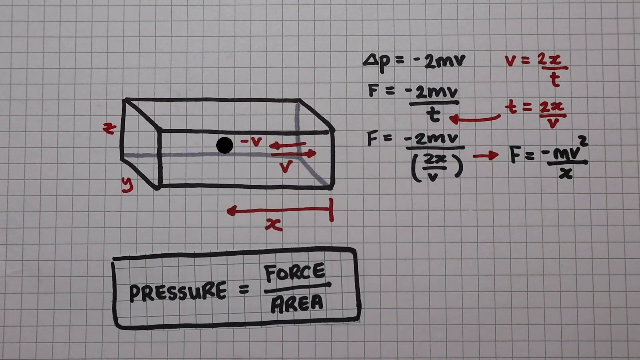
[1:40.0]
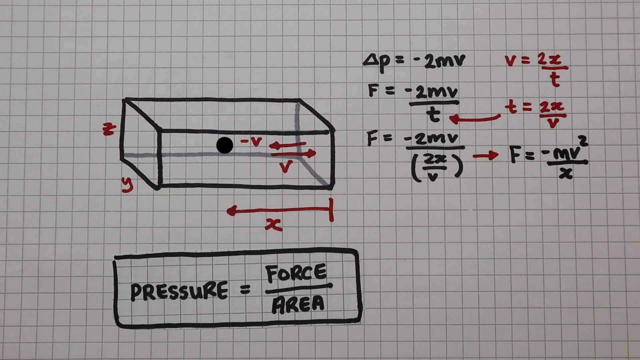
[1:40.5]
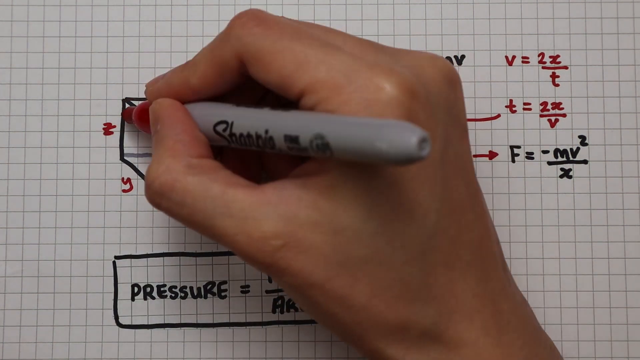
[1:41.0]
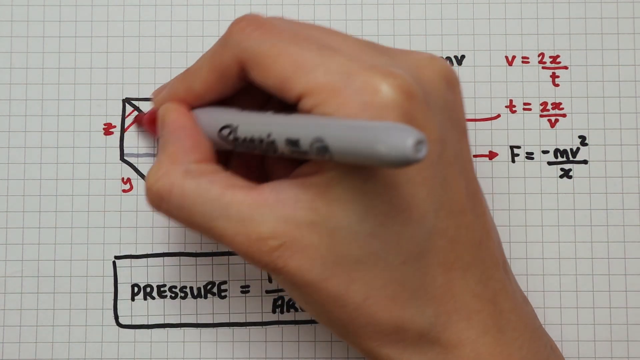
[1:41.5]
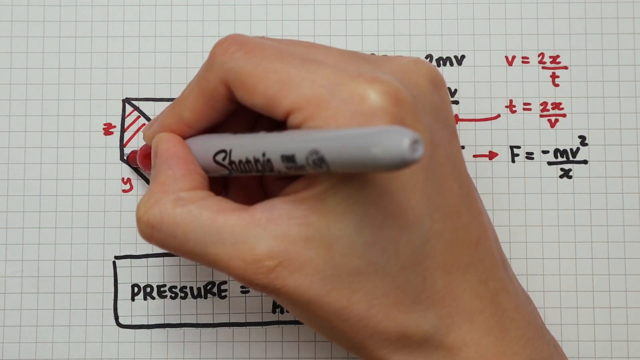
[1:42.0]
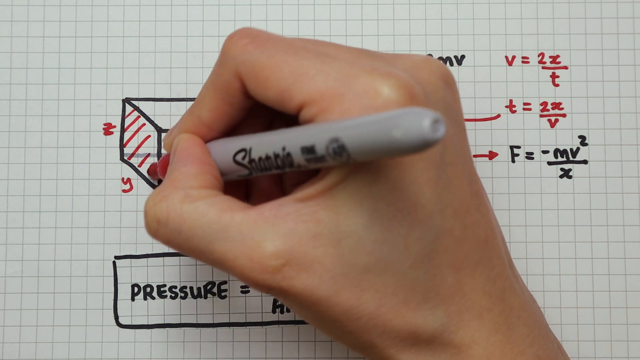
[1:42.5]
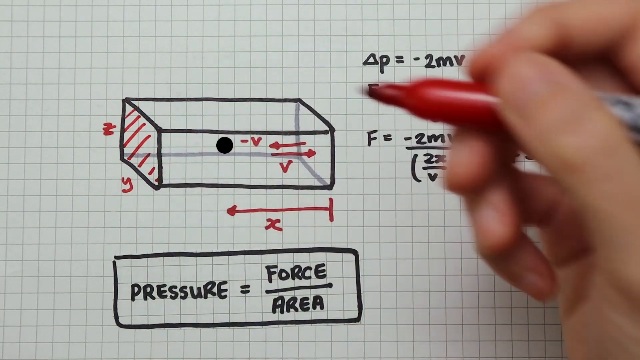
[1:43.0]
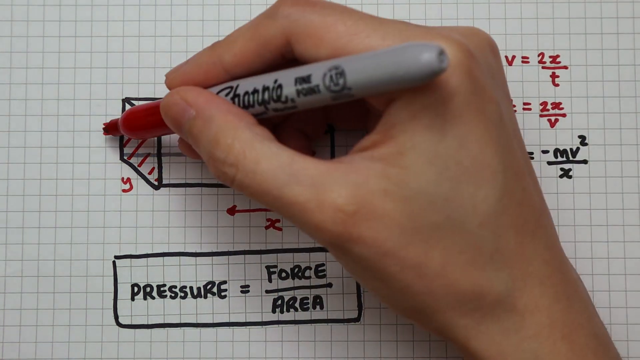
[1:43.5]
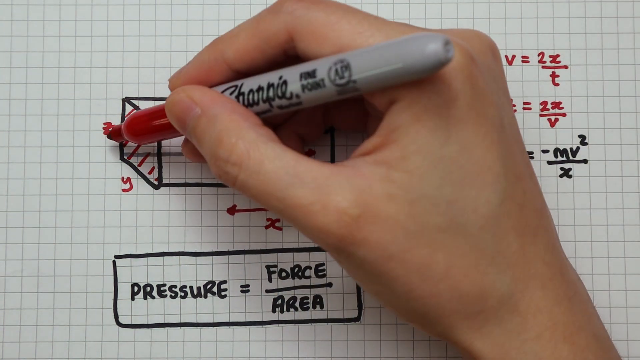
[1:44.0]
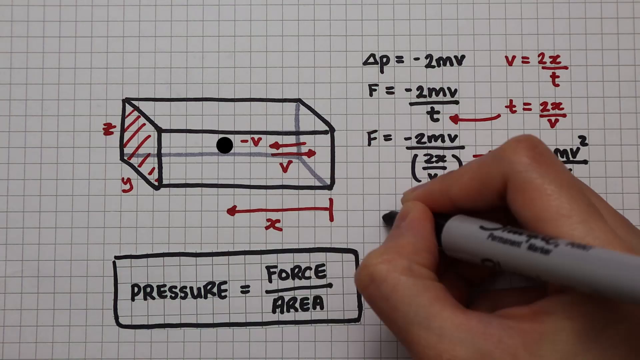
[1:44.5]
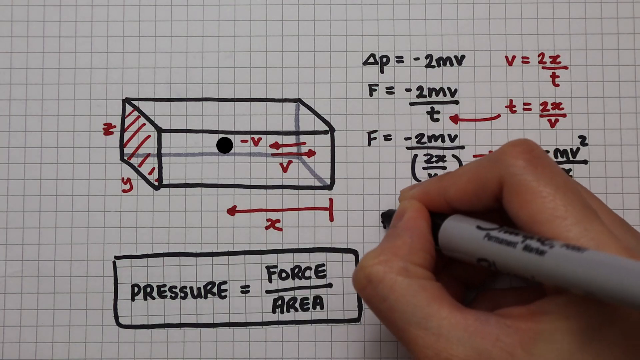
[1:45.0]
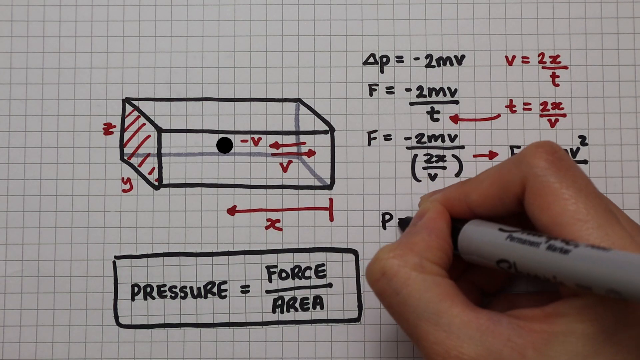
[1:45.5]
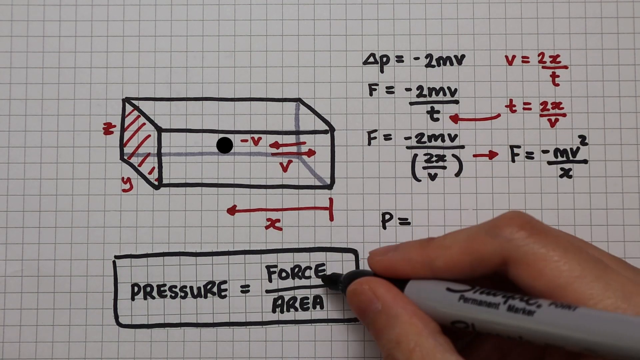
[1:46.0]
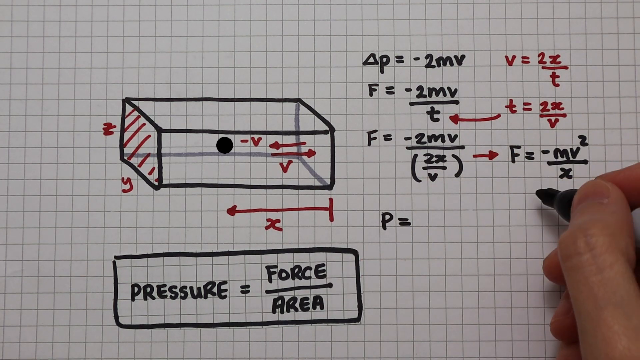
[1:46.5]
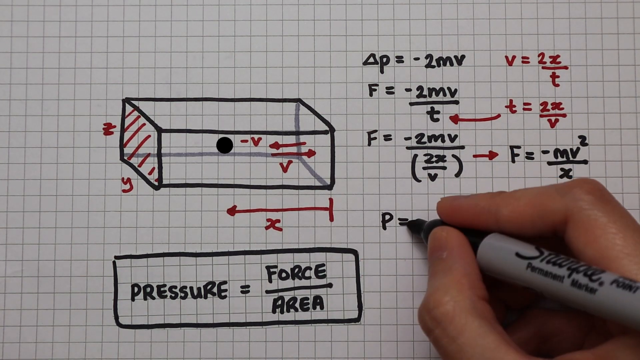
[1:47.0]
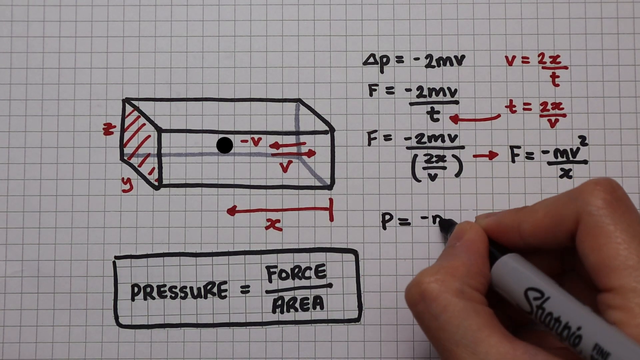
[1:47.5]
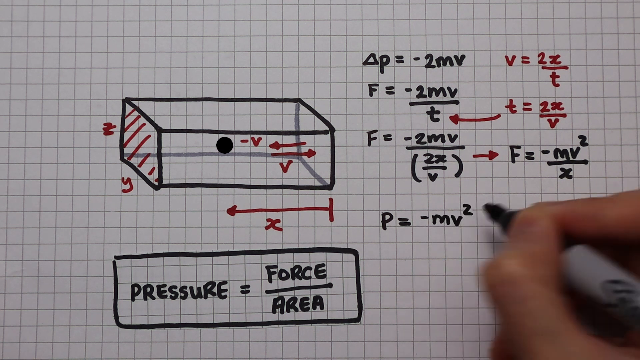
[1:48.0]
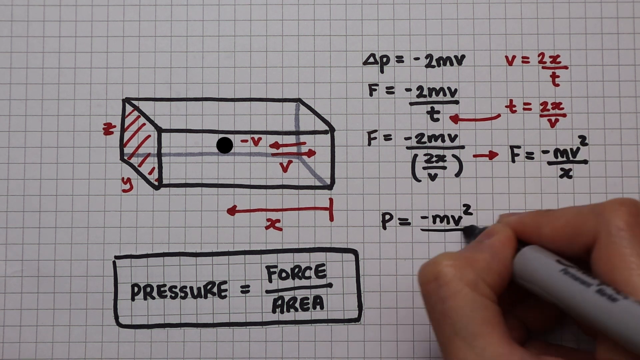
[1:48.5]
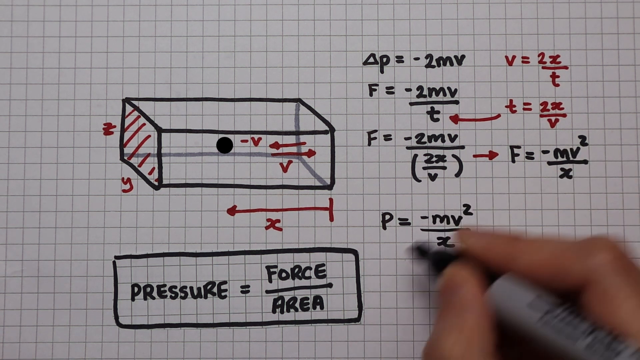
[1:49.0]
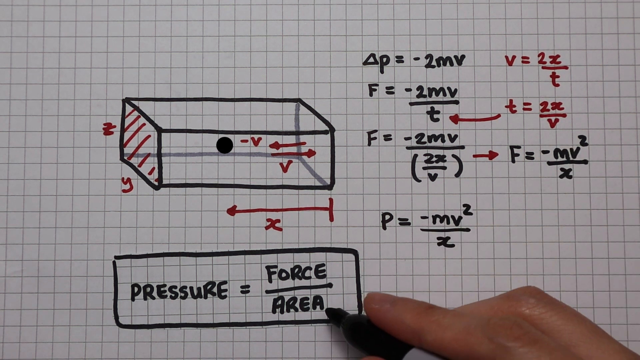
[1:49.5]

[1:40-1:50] The right hand comes up to the drawn three-dimensional box, holding a marker that is gray from the top down toward the thumb, with a red tip. On the left side of the box it draws six diagonal lines of varying lengths, going from the top right down toward the left. The hand motions with the marker to the top of the box, where there is a V; below it, on the side of the three-dimensional box, is a red Y. The hand moves over to the right side of the page and, in the fourth column going down, writes "P = -MV2" over X, with a line drawn under the X. The hand moves very briskly down the page.